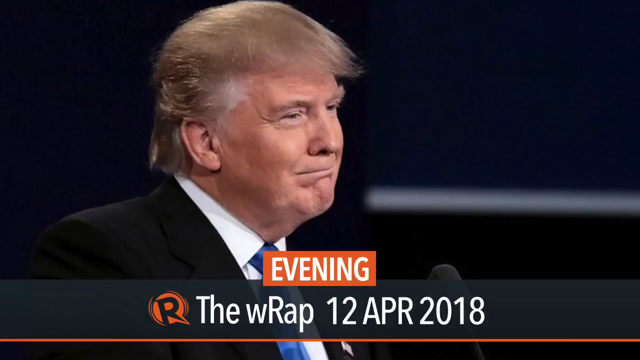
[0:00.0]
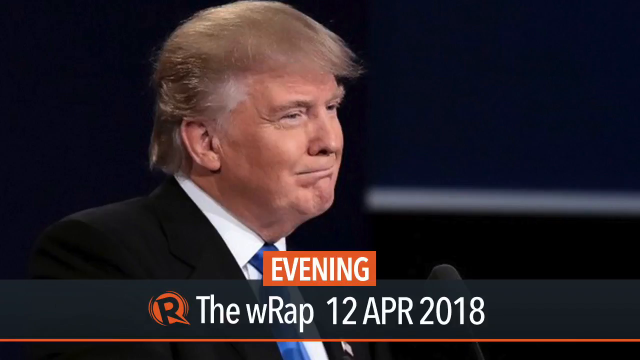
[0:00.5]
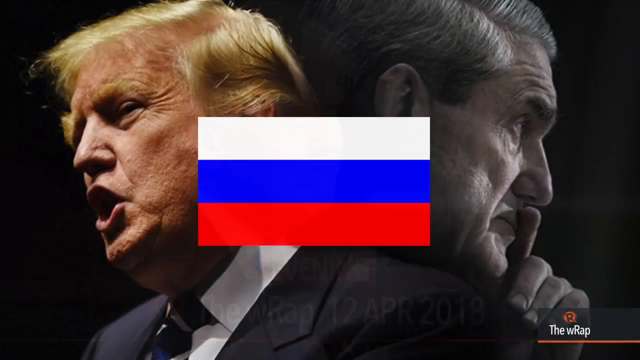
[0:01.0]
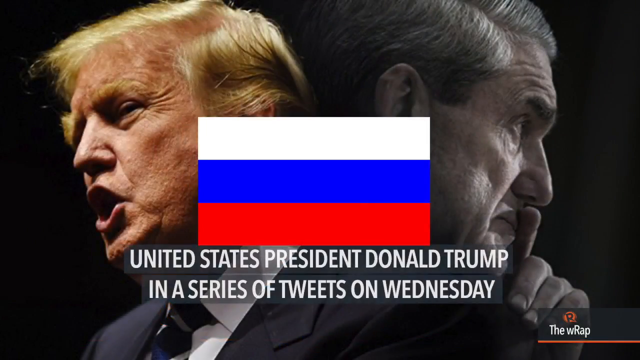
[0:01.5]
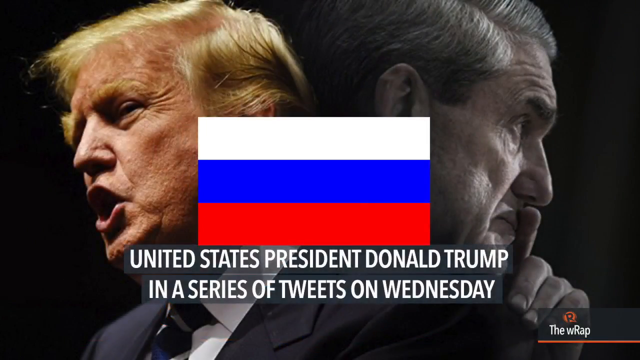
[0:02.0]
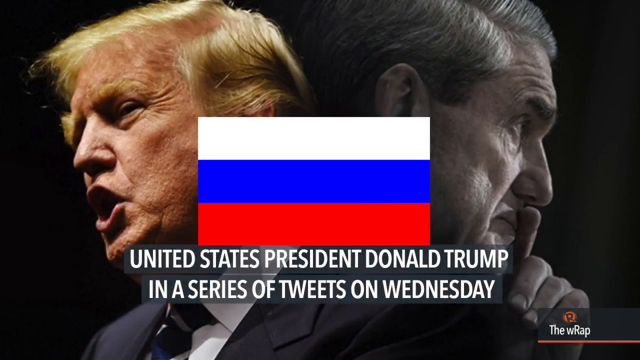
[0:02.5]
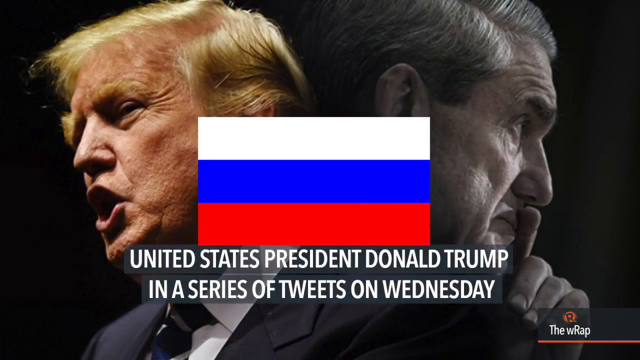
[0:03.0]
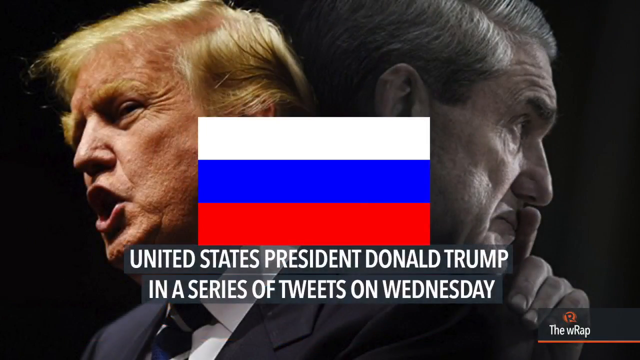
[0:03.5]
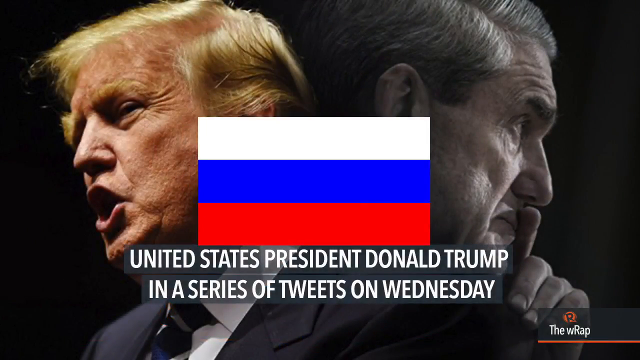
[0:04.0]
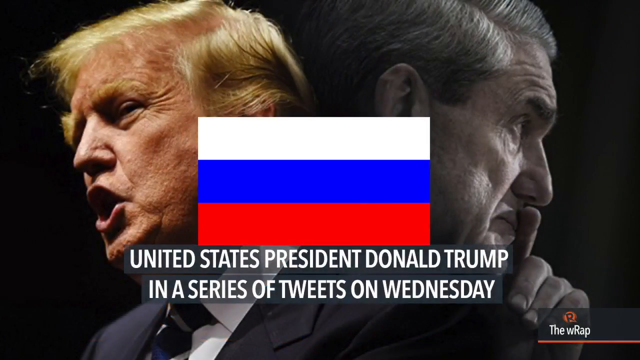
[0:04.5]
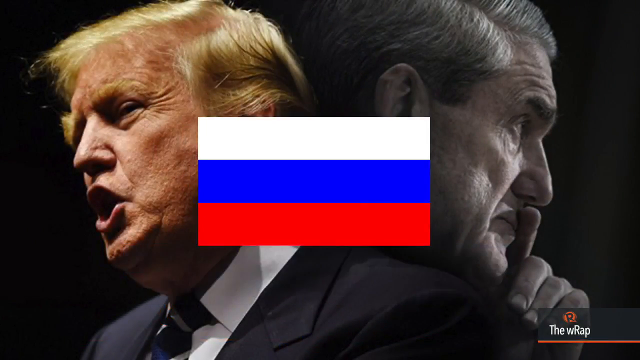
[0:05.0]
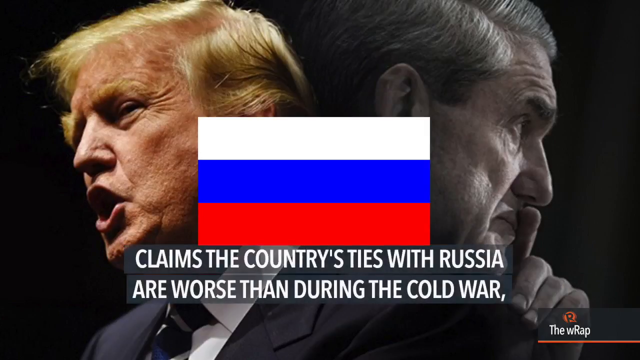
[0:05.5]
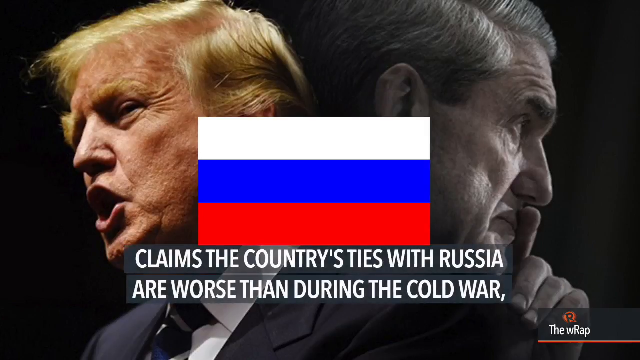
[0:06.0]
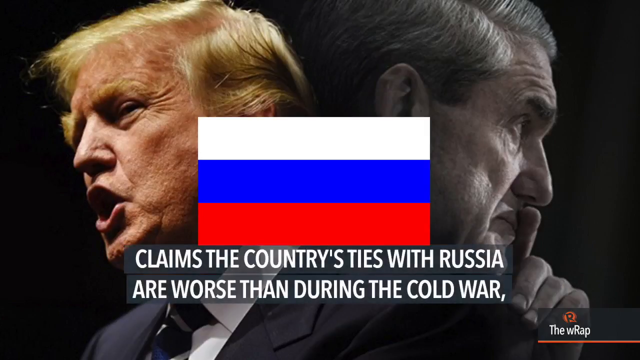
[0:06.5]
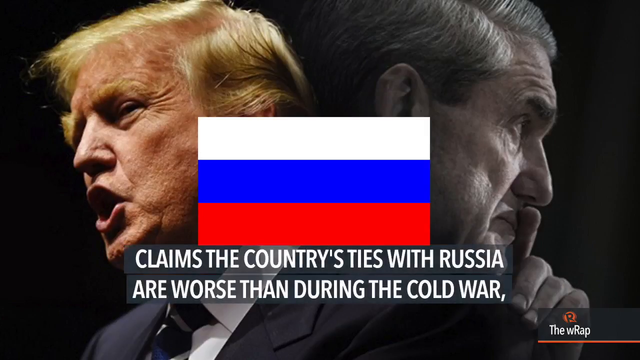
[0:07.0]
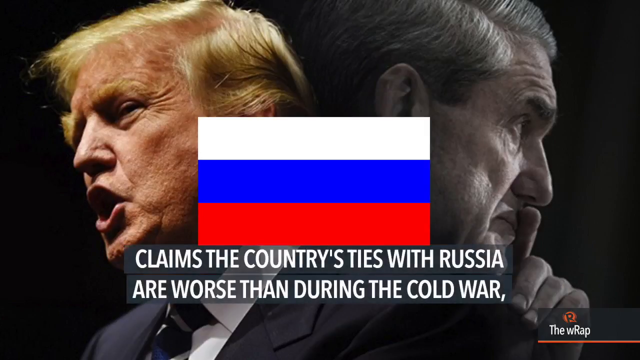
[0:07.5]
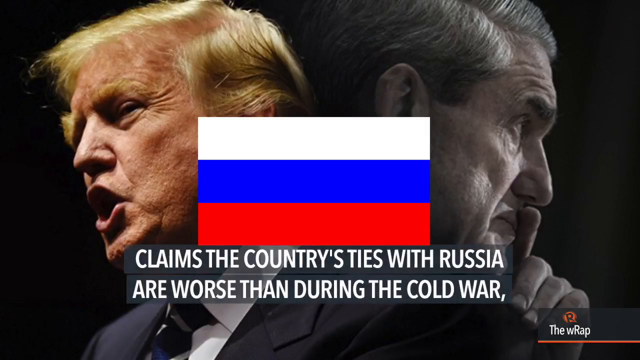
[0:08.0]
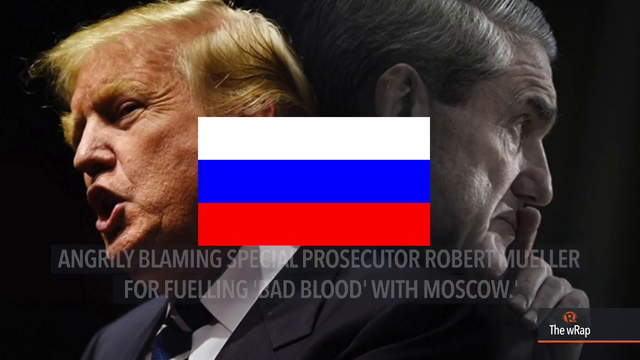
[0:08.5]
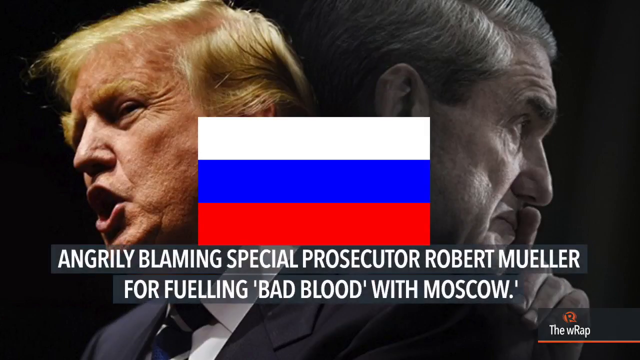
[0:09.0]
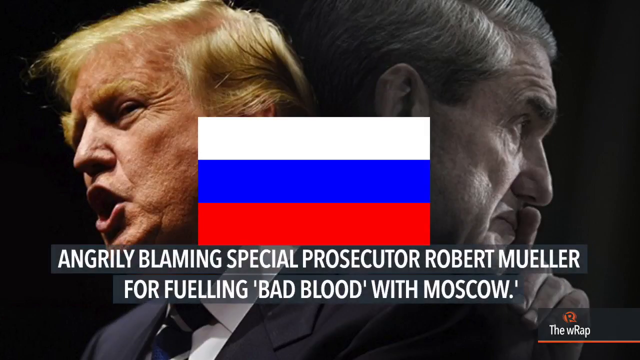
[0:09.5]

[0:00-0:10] The thumbnail shows President Trump half-smiling, half-smirking. His hair is a reddish color with graying at the temples, in his usual style, combed over and going out to the front. The background is black. He wears a black suit, a white shirt and a blue tie. At the bottom of the screen an orange text box says "EVENING" in white capital letters. A black R and an orange circle are shown, and to the right of them white text says "THE RAP 12 APR 2018", with the R in "RAP" capitalized and the rest of the word in lowercase. After this still photo of Trump, the scene changes to a different photo: Trump appears to be talking, his lips oval-shaped, and he faces to the right. There is also an unidentified man with gray hair and a little black at the temples, resting his left index finger on his mouth; he looks to be about 65 years old. There is a graphic of a flag that is white on top, blue in the middle and red on the bottom. White capital text reads "UNITED STATES PRESIDENT DONALD TRUMP IN A SERIES OF TWEETS ON WEDNESDAY". After a few moments the text changes while the rest of the image stays the same, reading "CLAIMS THE COUNTRY'S TIES WITH RUSSIA ARE WORSE THAN DURING THE COLD WAR". The text then changes again to "ANGRILY BLAMING SPECIAL PROSECUTOR ROBERT MUELLER FOR FUELING BAD BLOOD WITH MOSCOW".